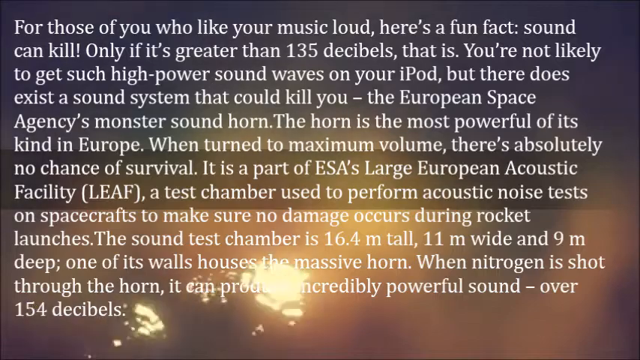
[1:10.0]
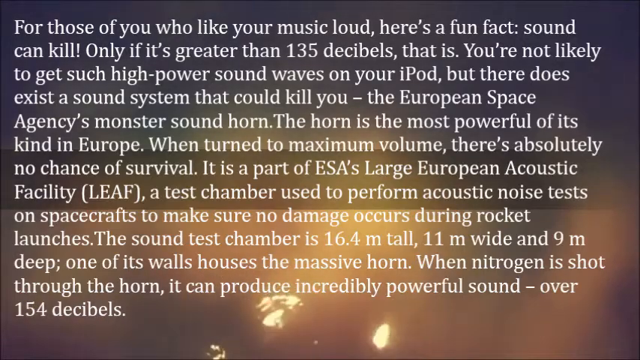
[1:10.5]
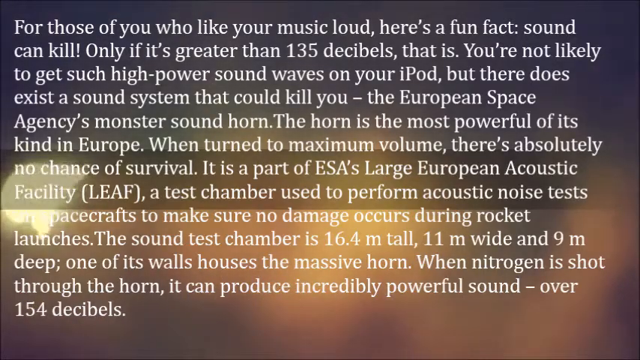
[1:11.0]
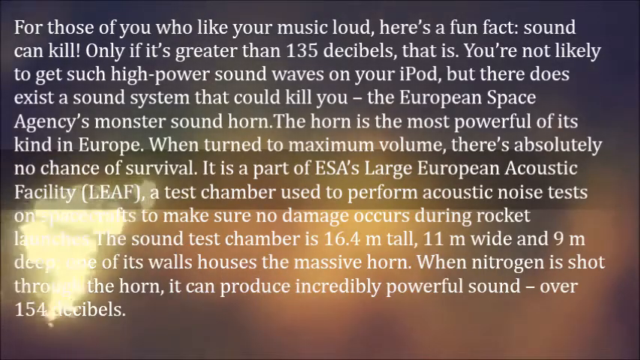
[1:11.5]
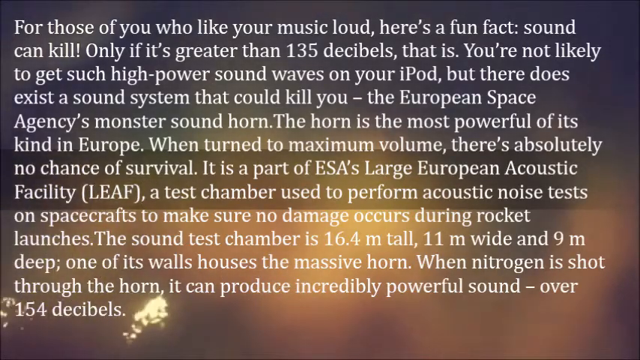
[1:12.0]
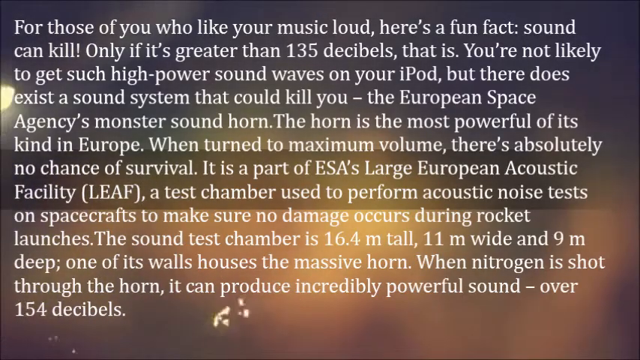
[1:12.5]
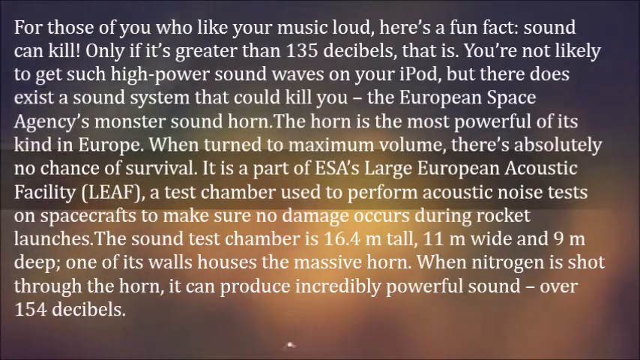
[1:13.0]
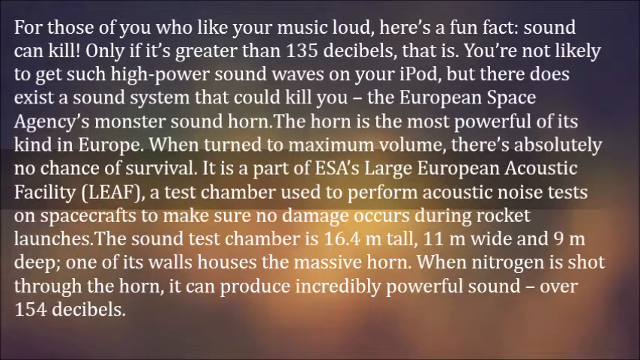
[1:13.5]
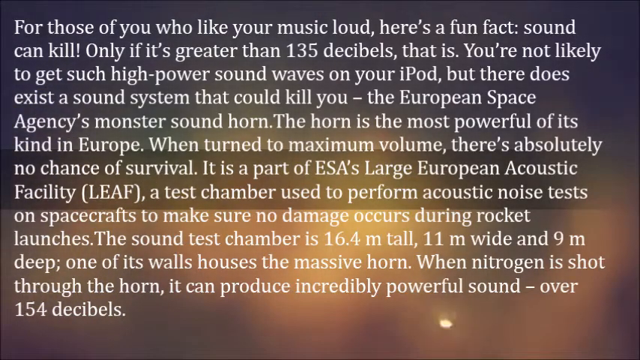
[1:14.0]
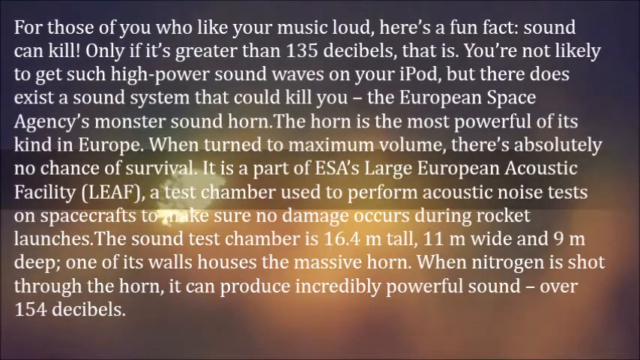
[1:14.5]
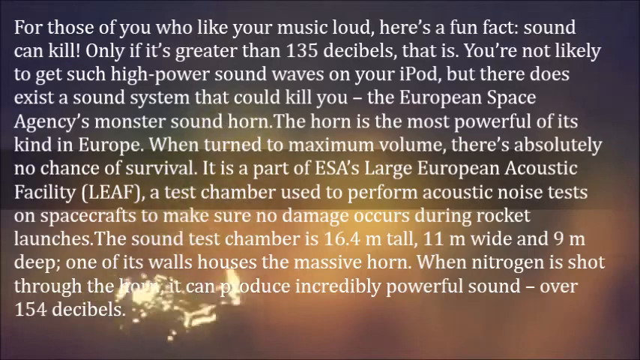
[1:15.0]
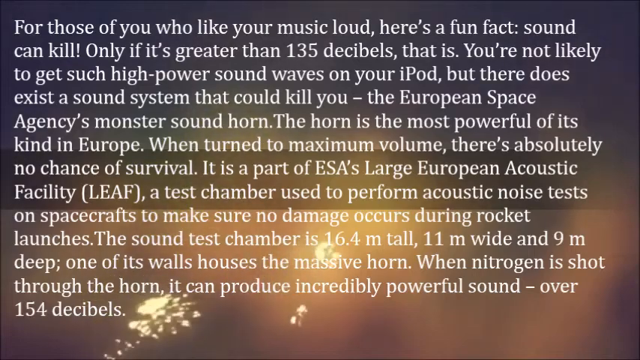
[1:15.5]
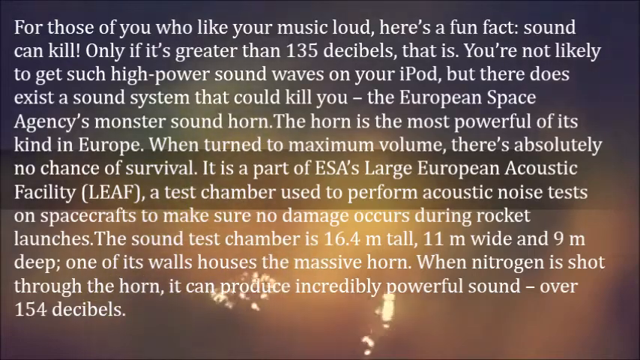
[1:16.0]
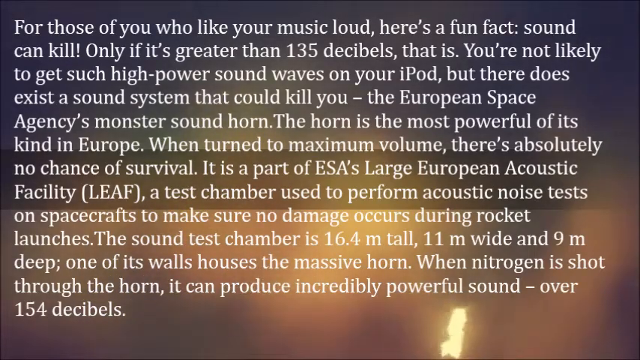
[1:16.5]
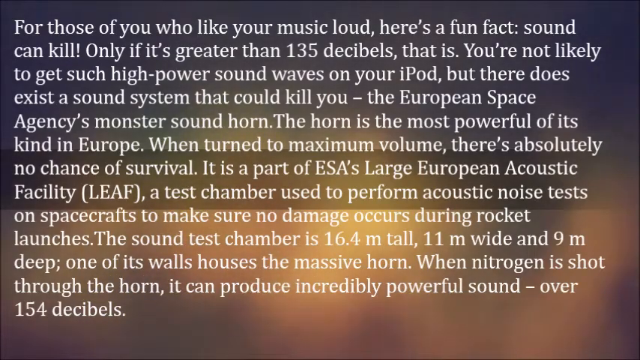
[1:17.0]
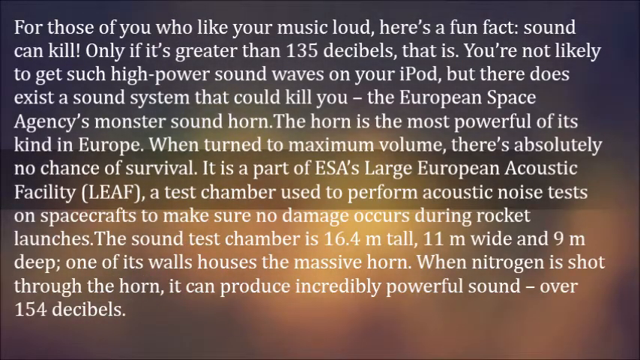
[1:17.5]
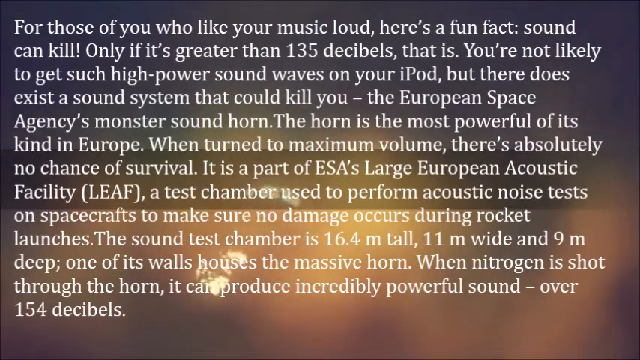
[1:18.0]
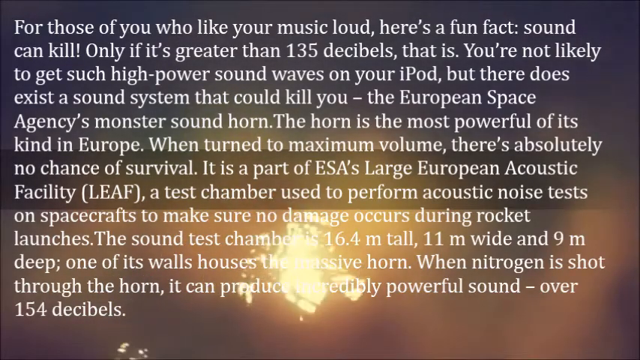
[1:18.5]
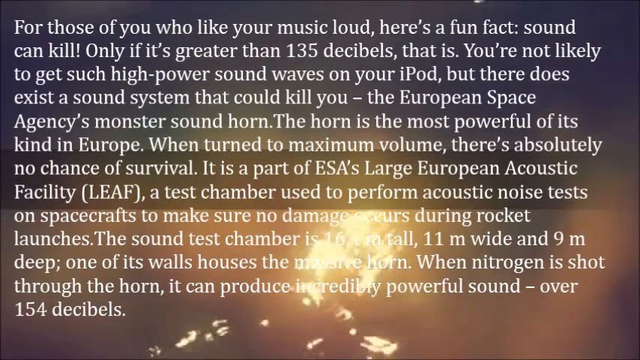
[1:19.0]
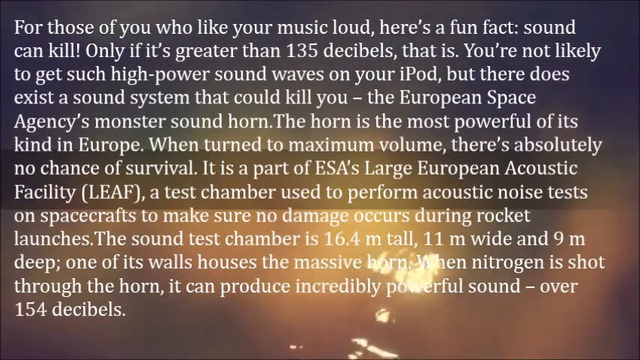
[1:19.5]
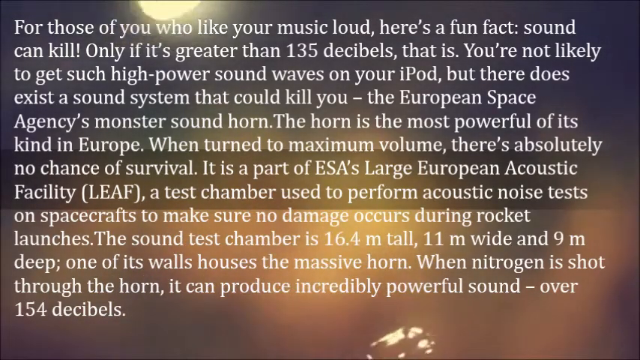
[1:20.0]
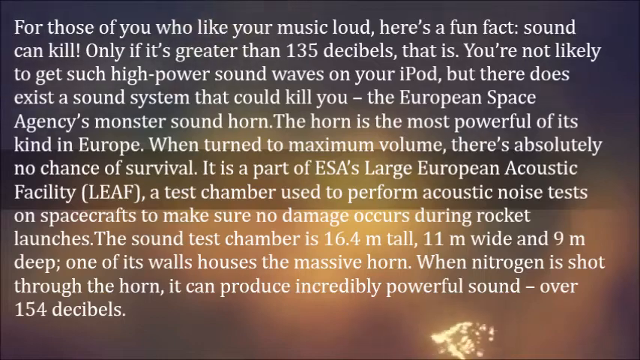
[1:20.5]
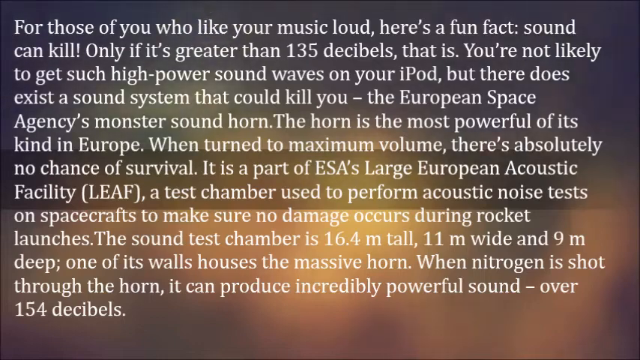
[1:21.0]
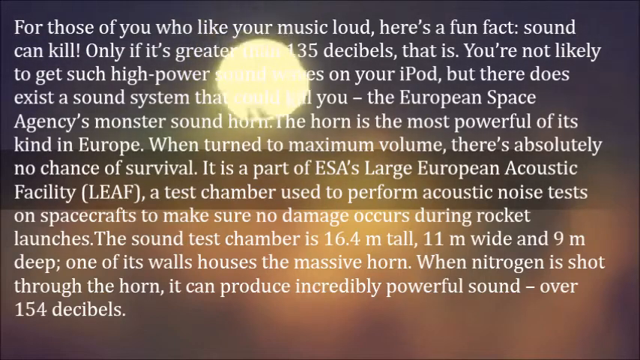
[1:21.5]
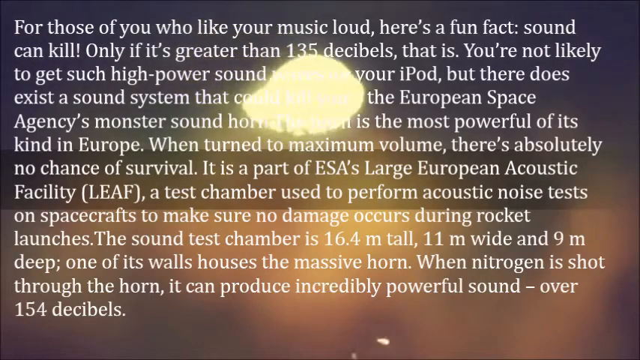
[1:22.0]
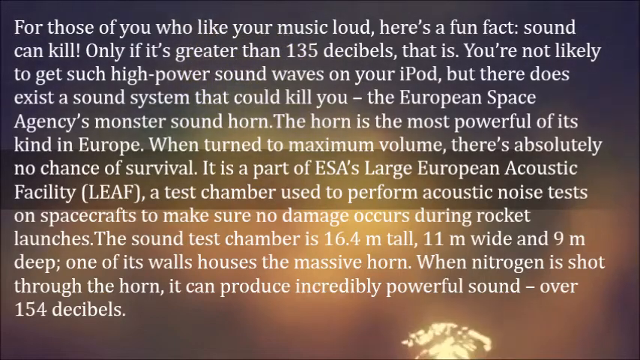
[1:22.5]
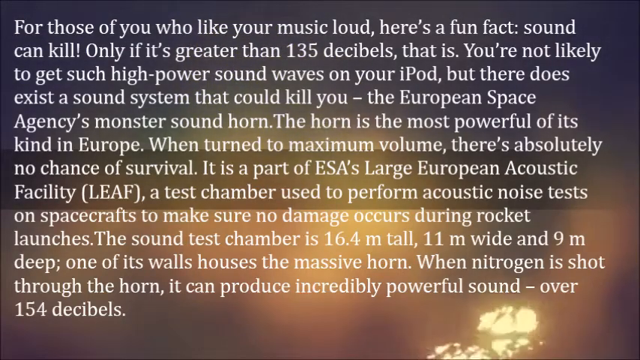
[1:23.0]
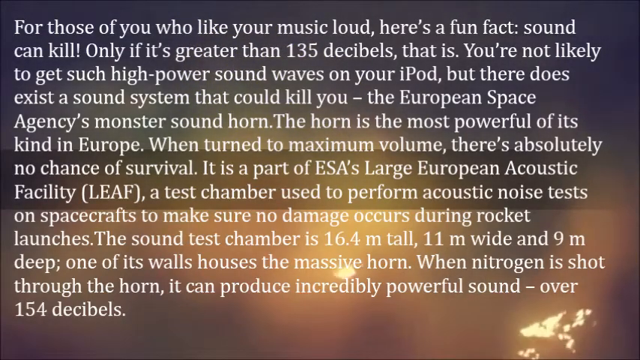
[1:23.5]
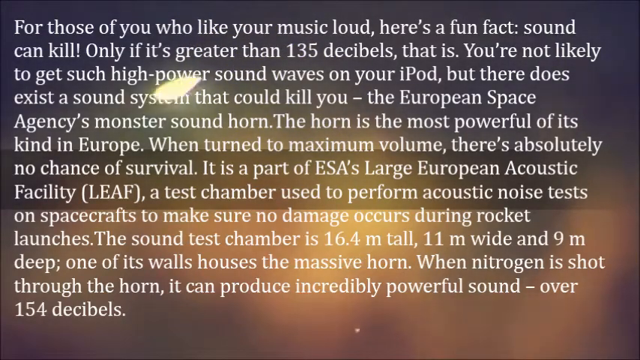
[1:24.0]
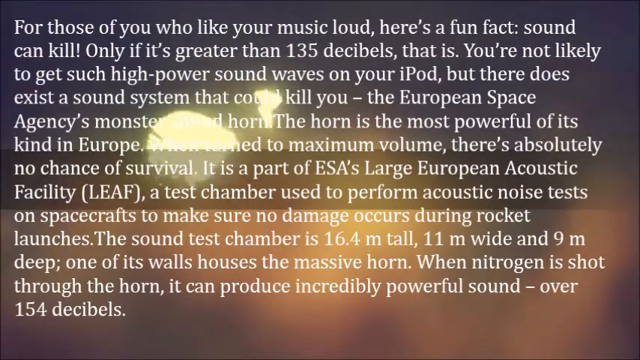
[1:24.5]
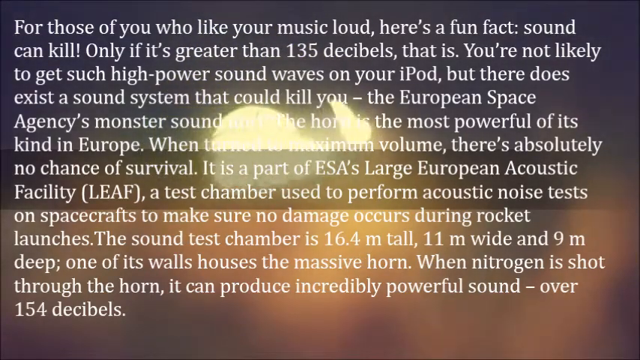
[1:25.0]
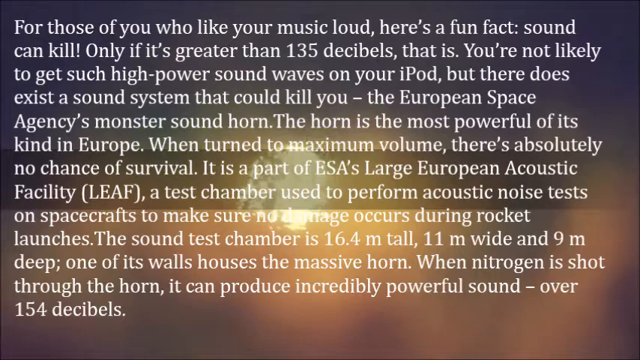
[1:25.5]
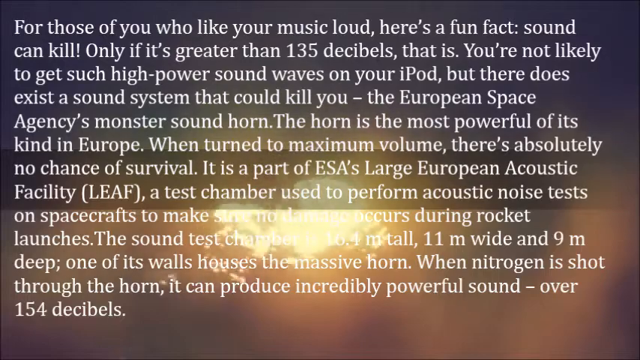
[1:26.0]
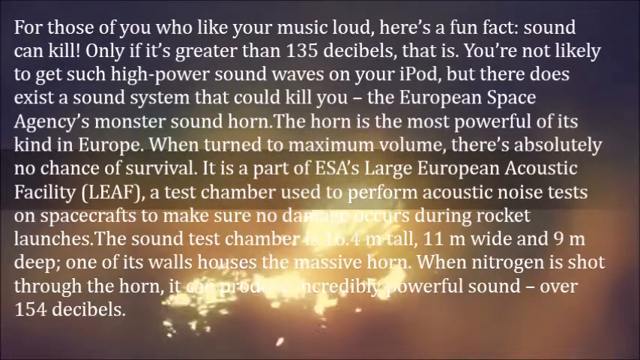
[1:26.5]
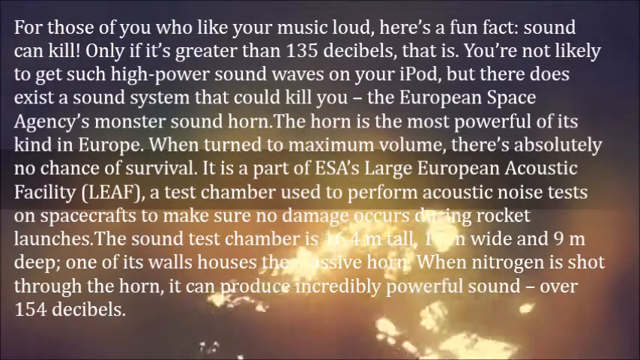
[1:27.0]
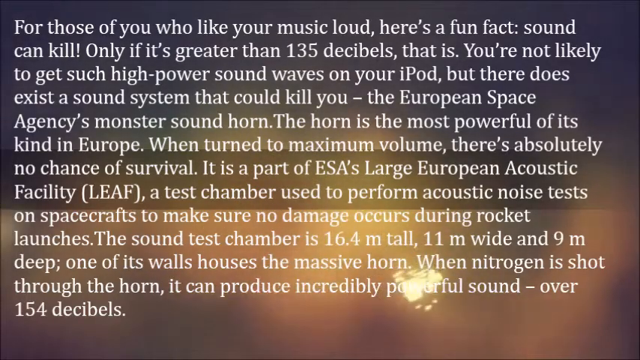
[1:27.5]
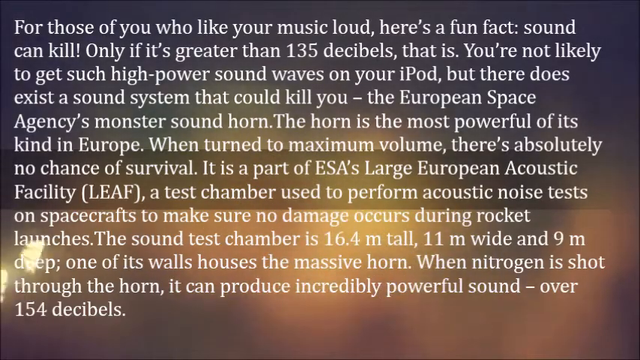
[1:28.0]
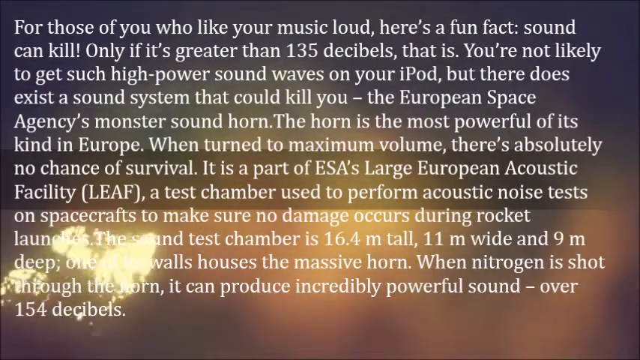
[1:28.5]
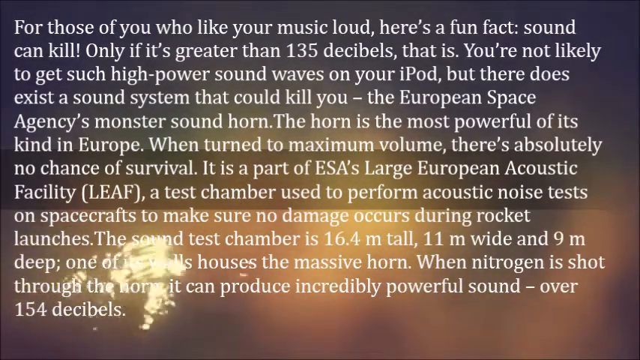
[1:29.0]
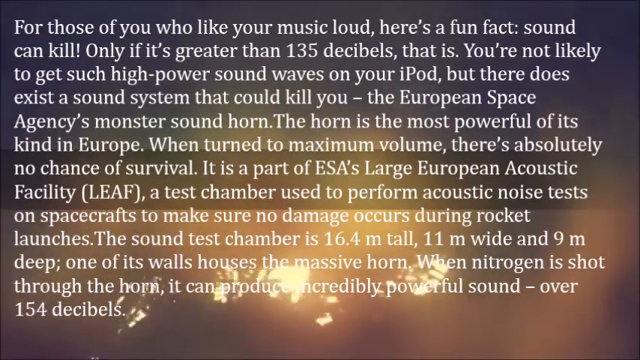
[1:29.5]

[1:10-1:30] The same paragraph about the 154-decibel horn is still on screen.